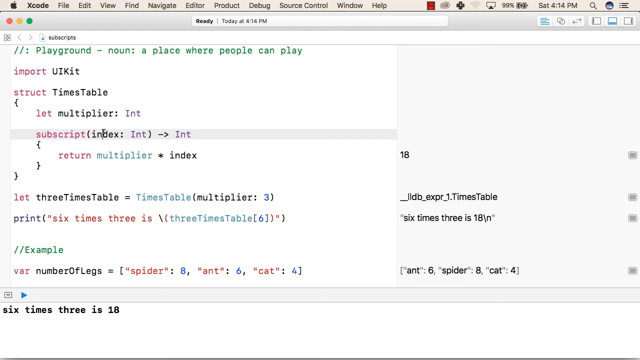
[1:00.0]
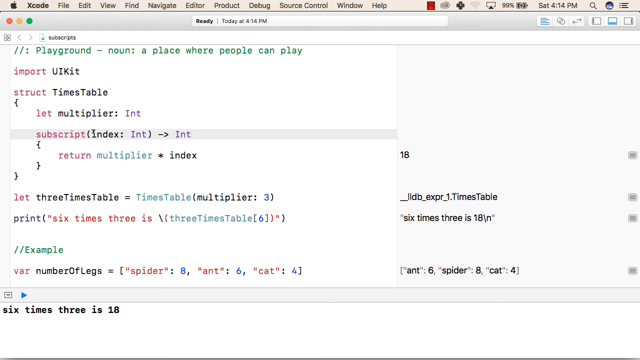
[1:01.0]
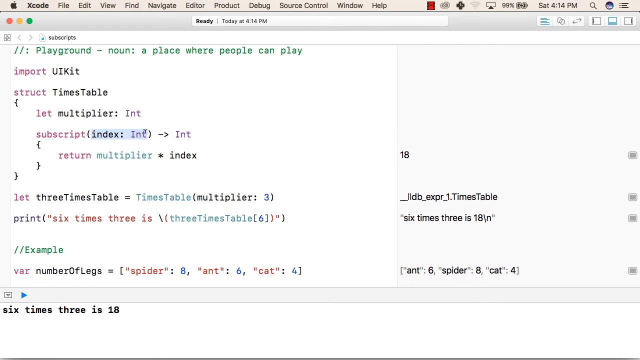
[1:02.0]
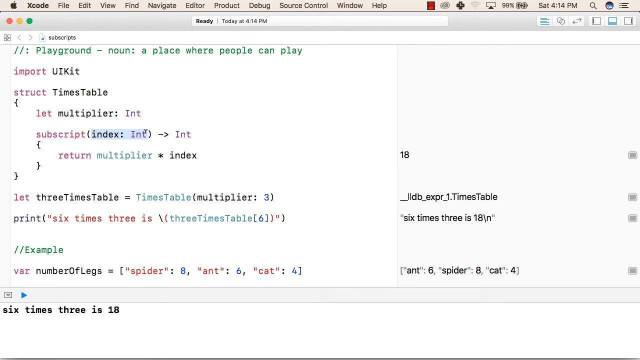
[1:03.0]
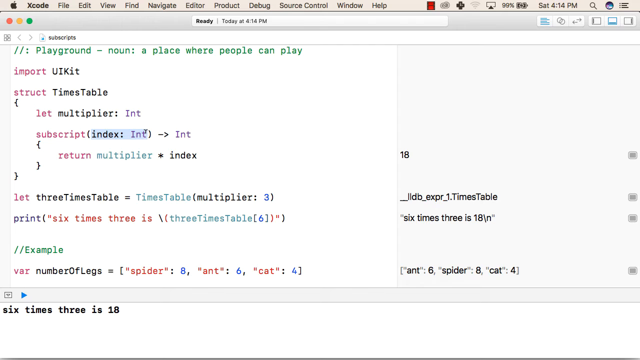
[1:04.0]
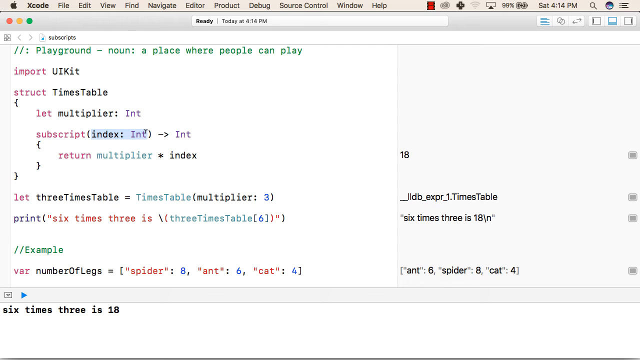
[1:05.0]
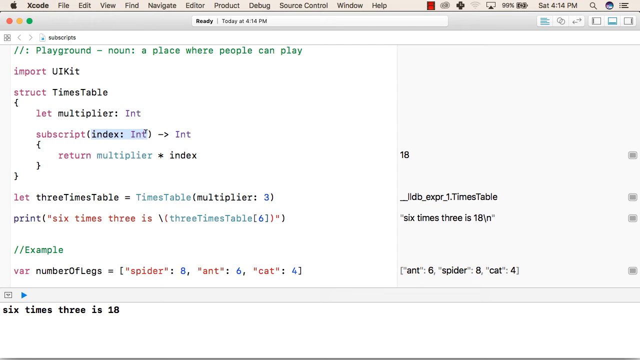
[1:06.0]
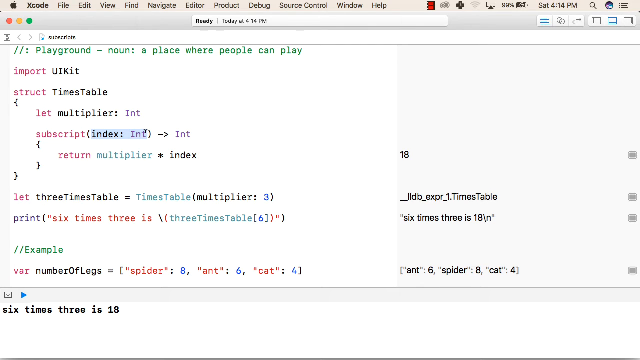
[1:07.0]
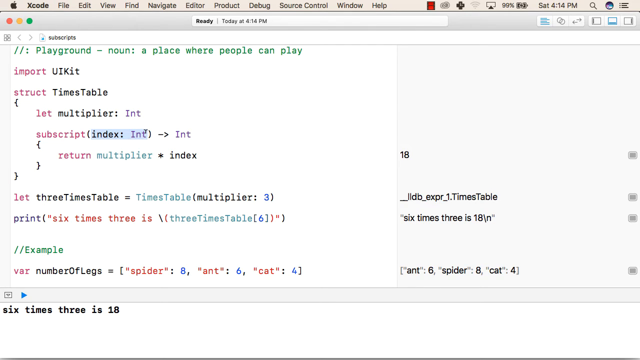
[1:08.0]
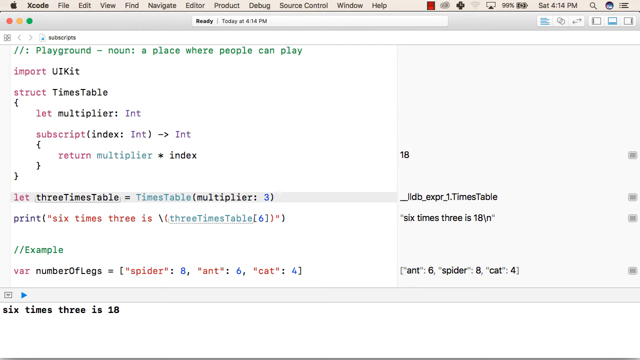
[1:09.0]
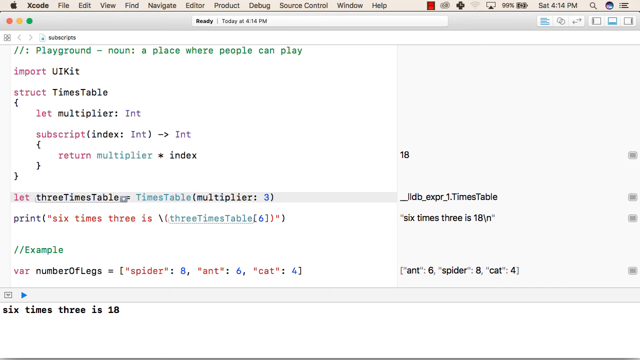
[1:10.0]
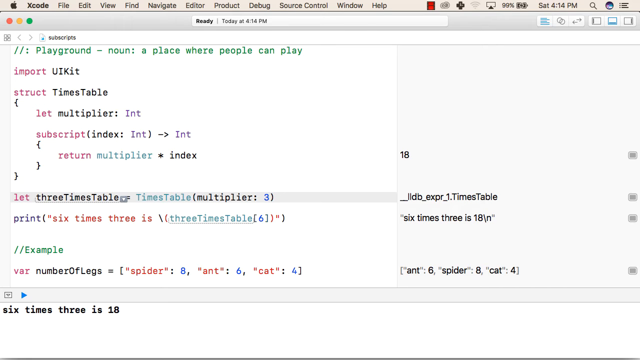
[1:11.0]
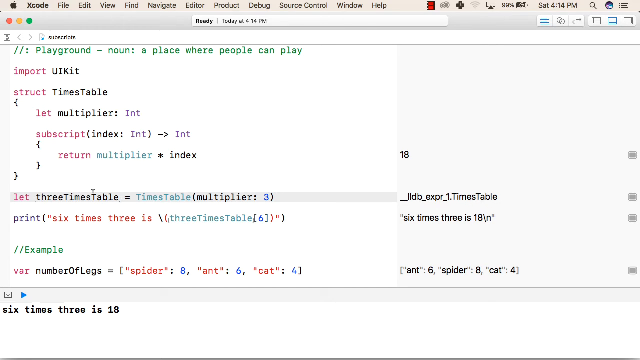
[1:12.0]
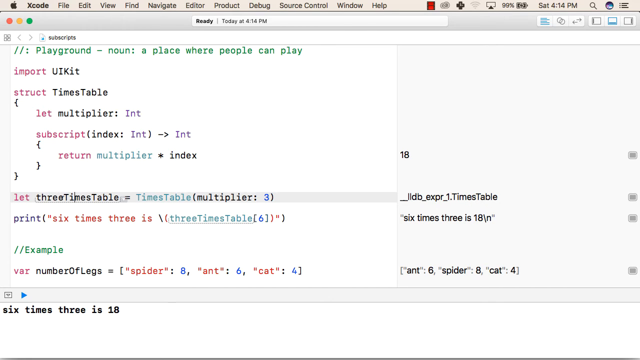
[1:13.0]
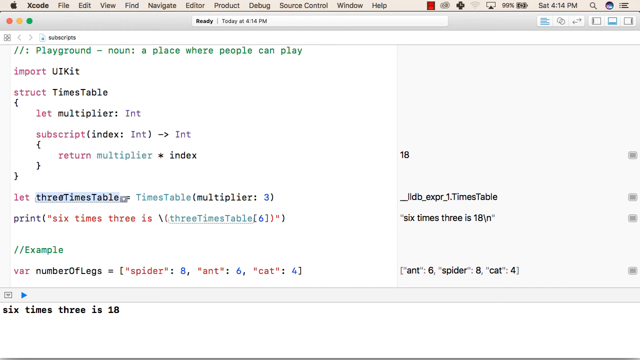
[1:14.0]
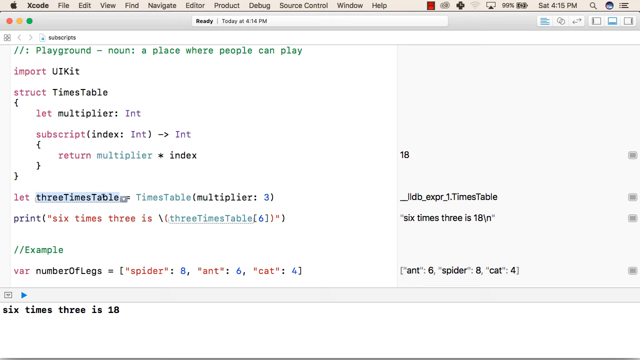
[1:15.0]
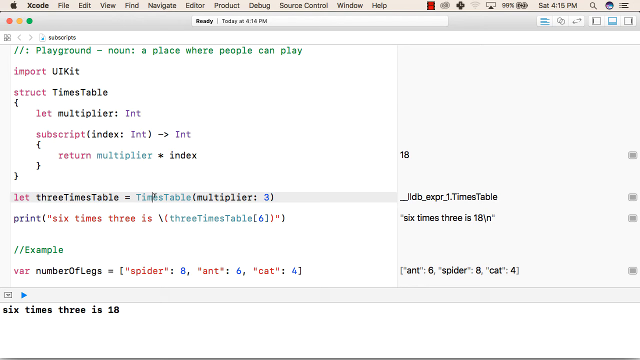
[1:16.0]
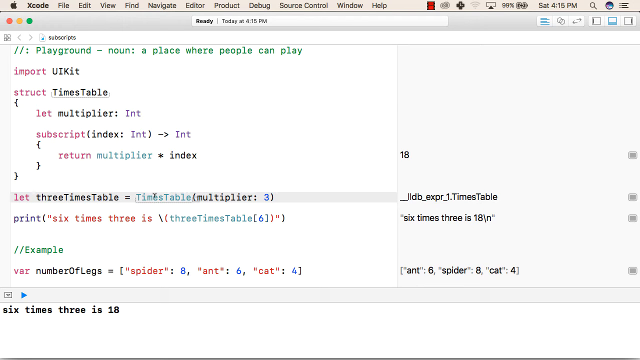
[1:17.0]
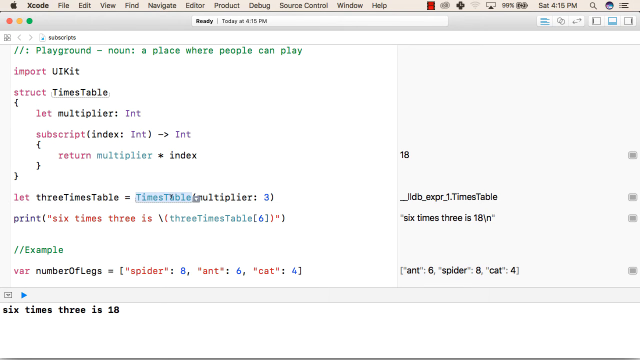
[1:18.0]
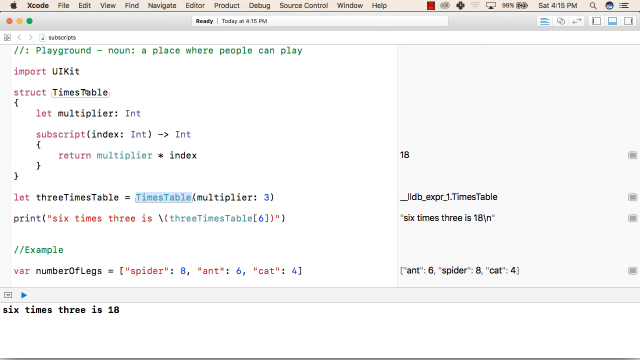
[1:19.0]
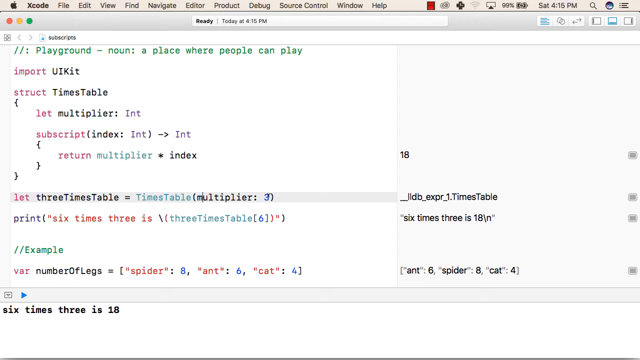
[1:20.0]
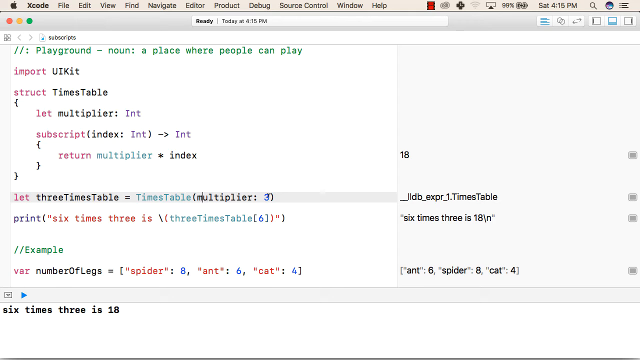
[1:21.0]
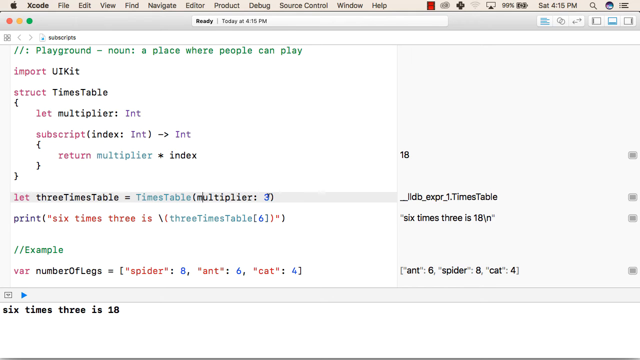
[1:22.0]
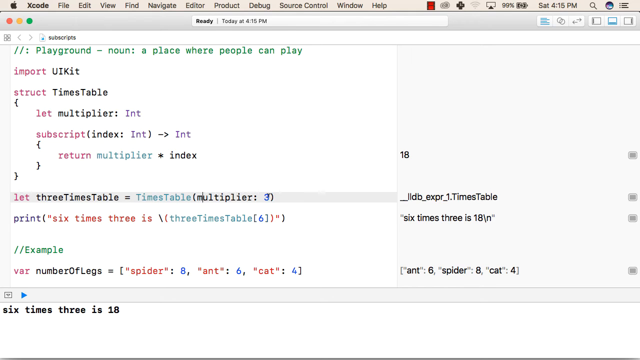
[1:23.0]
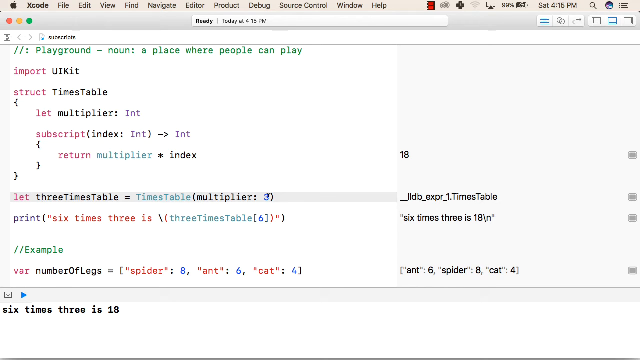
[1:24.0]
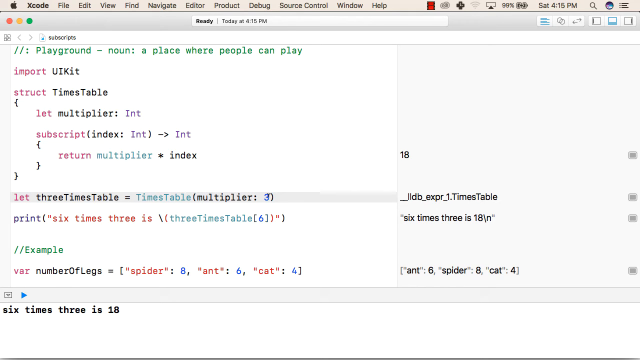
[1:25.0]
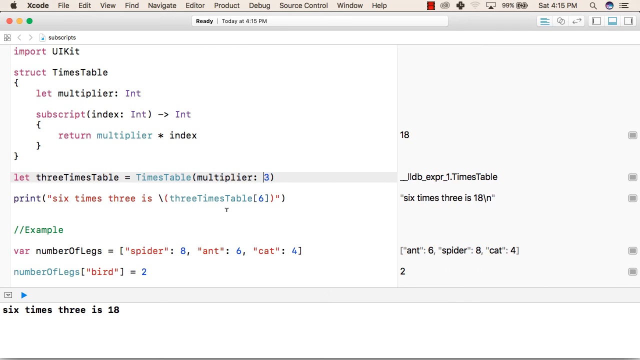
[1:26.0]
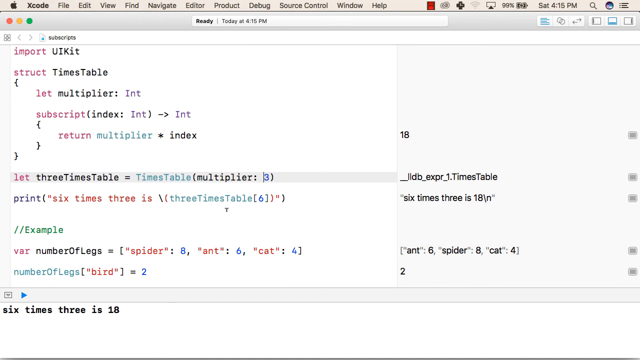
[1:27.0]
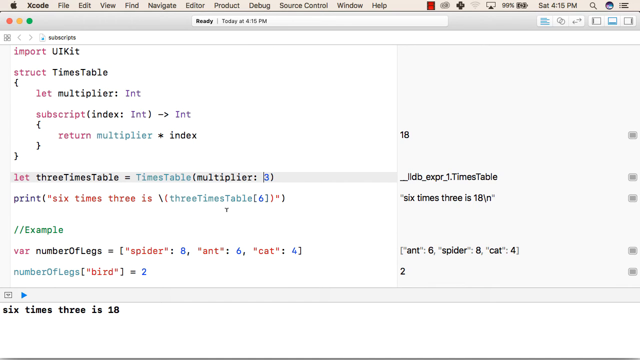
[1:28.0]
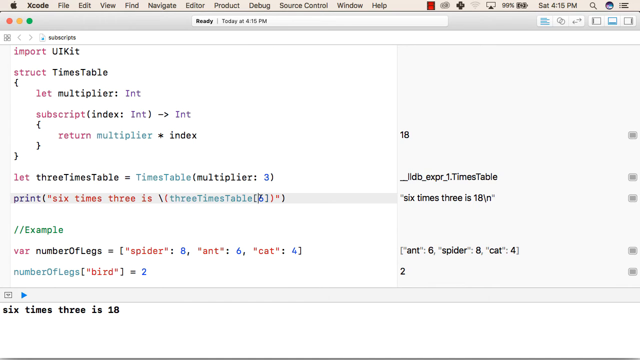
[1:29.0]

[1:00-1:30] The subscripts example continues in Xcode. The menu headers read Apple, File, Edit, View, Find, Navigate, Editor, Product, Debug, Source Control, Window, and Help. The computer is charged to 99% and is charging, and the screen shows Saturday at 4:15 pm. He writes code for a subscript: it looks like it asks for a number of legs, UI kit is imported, and playground is defined as a noun, "a place where people can play." He also puts in 6 times 3 equals 18.